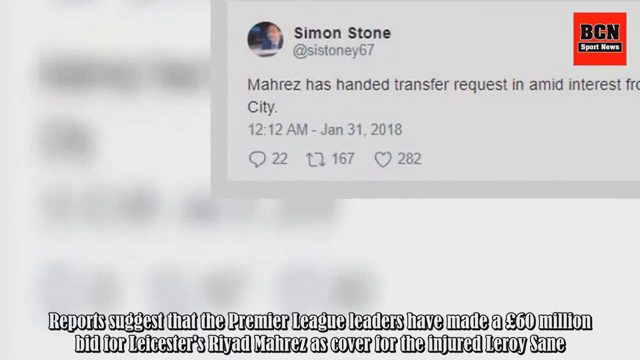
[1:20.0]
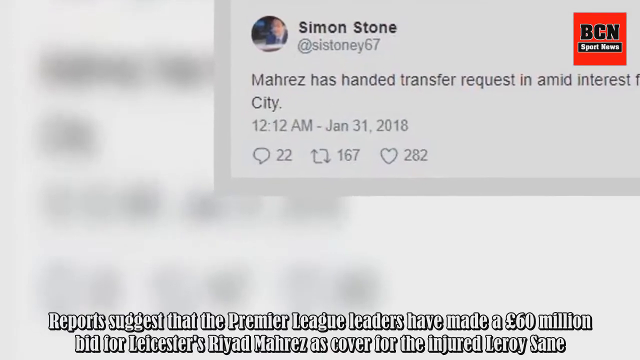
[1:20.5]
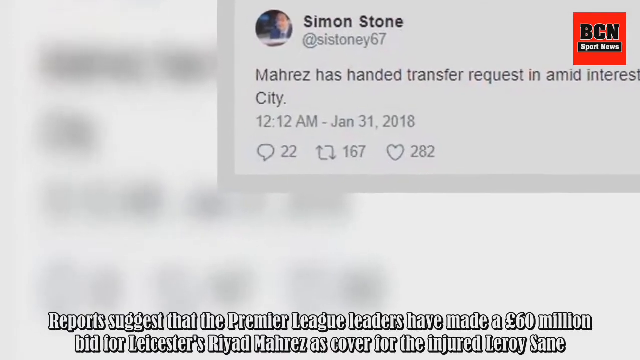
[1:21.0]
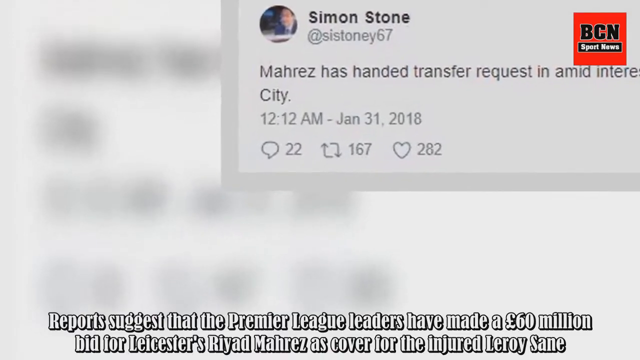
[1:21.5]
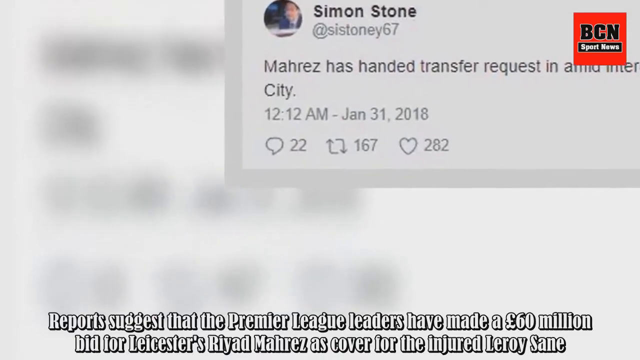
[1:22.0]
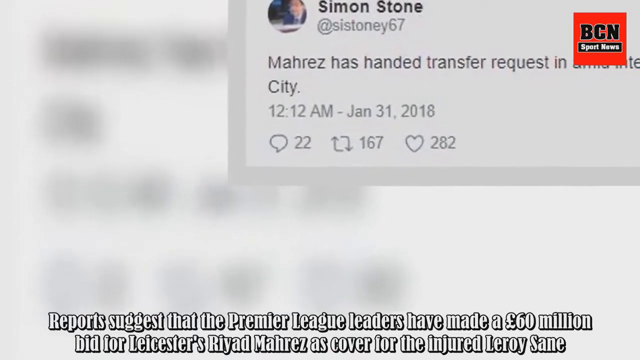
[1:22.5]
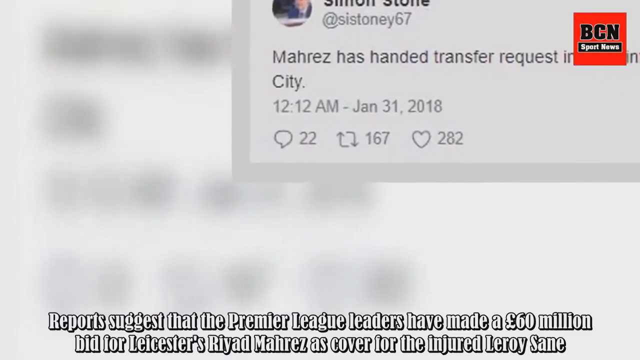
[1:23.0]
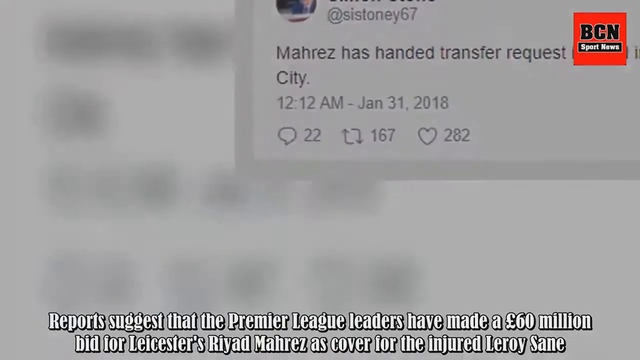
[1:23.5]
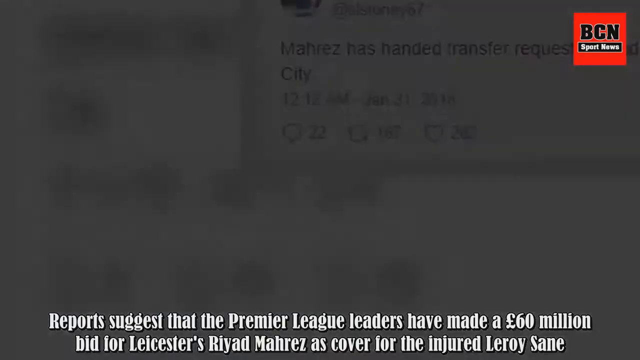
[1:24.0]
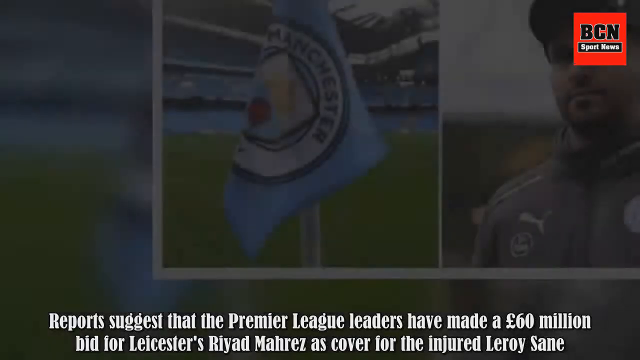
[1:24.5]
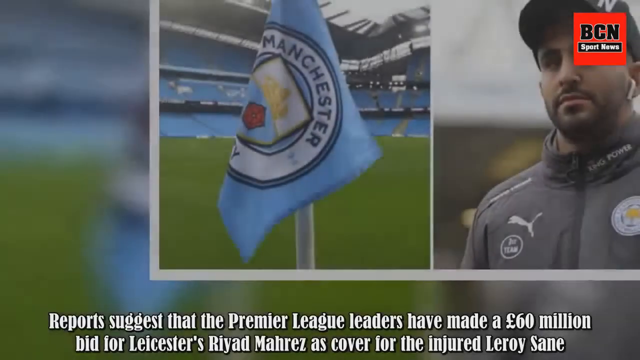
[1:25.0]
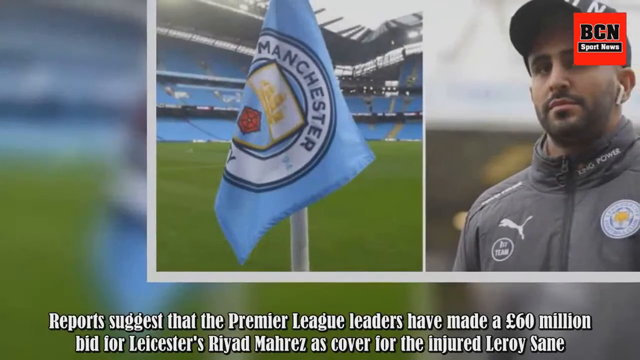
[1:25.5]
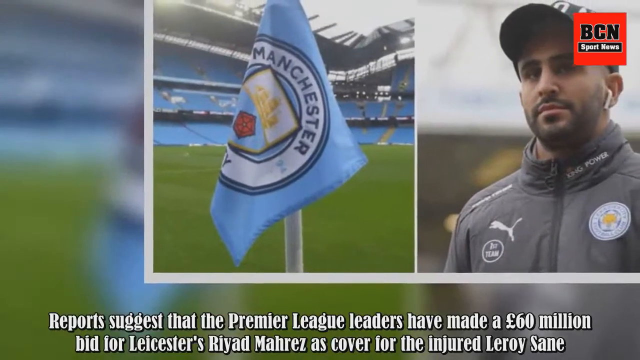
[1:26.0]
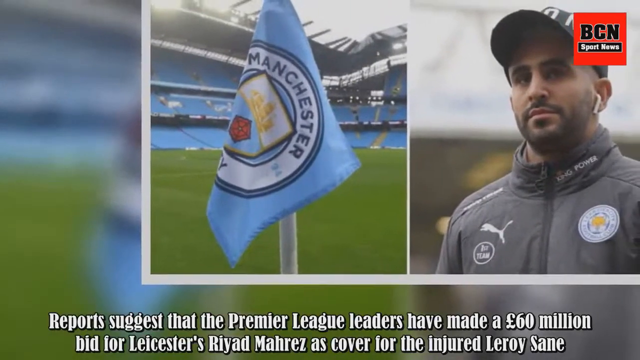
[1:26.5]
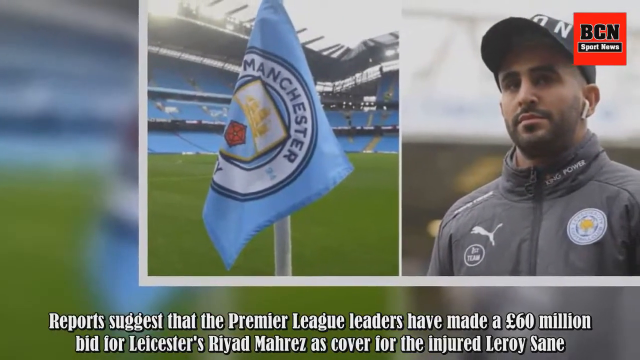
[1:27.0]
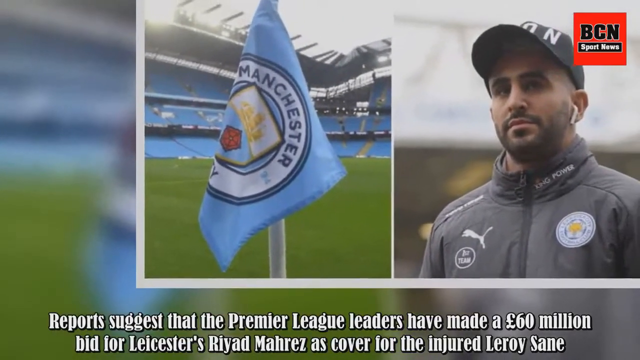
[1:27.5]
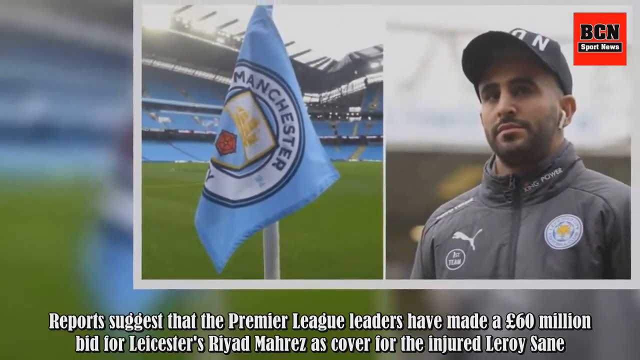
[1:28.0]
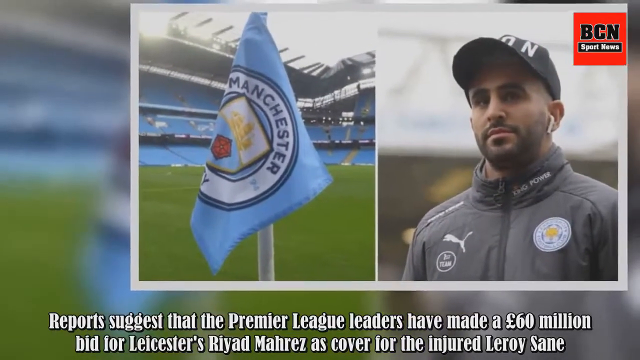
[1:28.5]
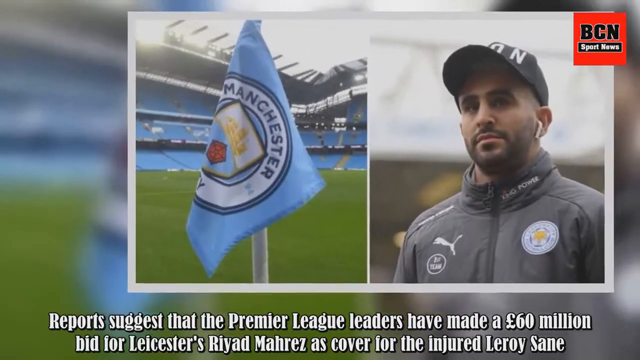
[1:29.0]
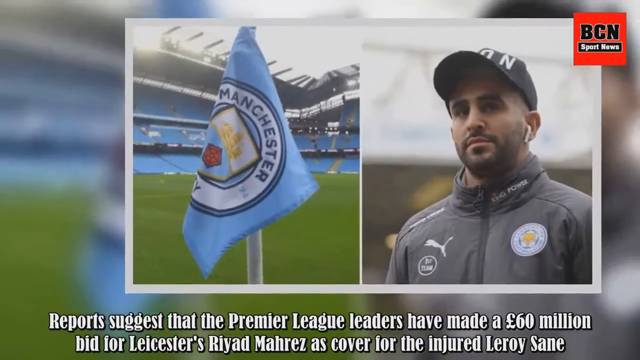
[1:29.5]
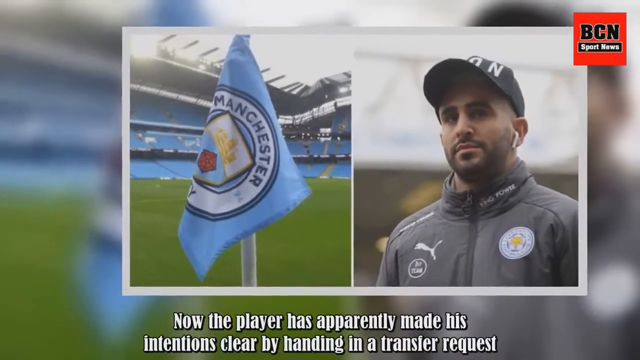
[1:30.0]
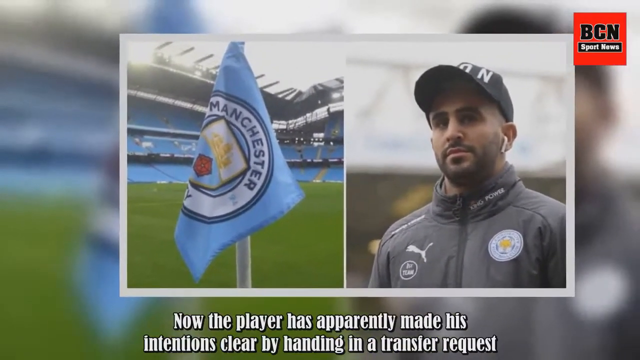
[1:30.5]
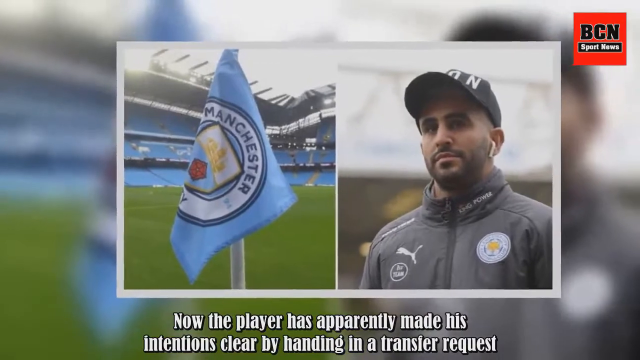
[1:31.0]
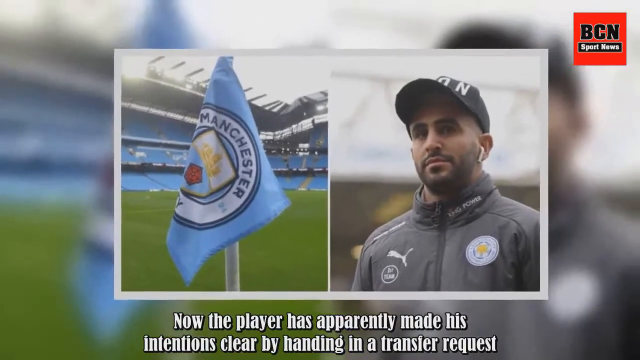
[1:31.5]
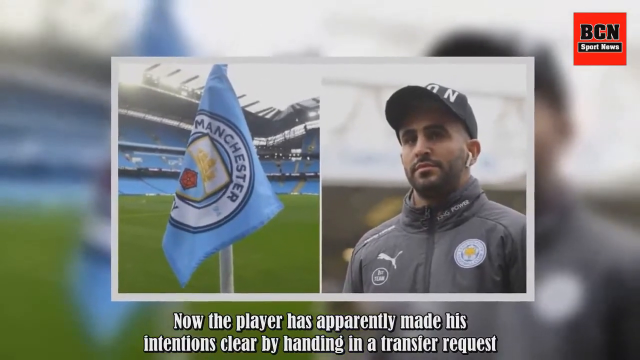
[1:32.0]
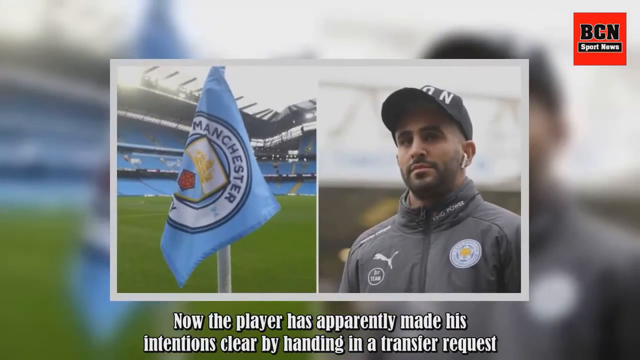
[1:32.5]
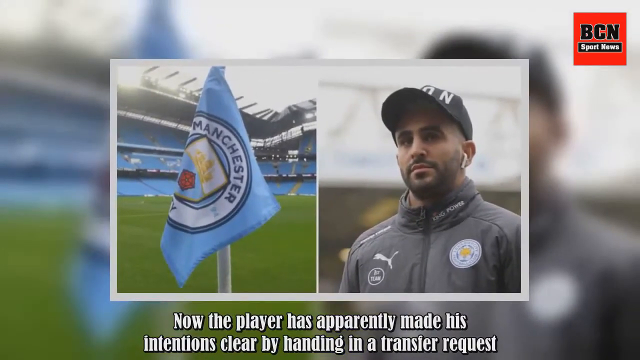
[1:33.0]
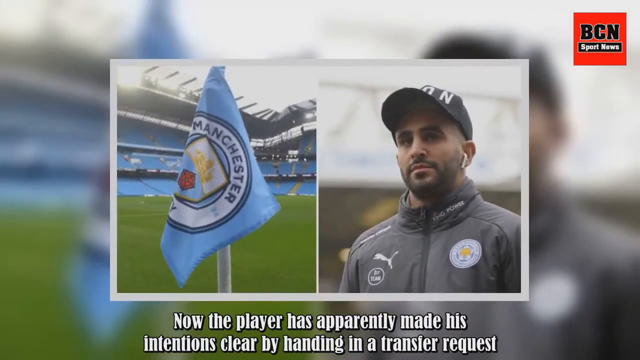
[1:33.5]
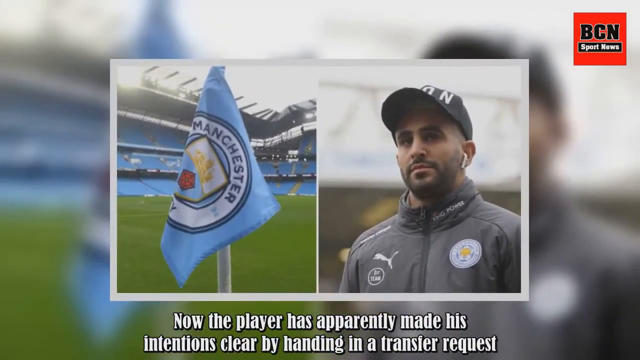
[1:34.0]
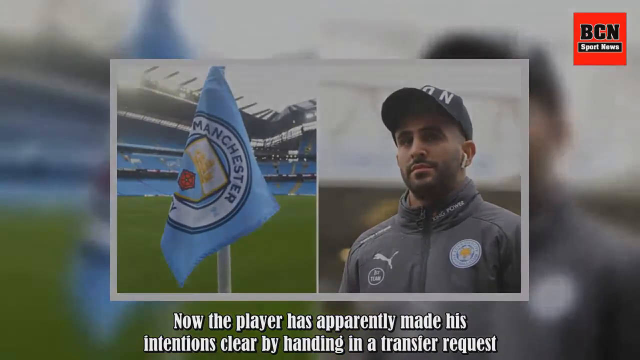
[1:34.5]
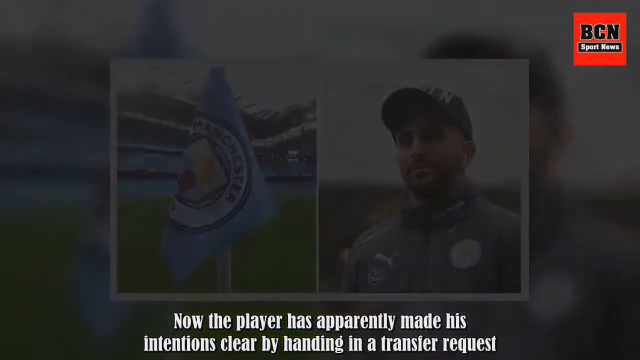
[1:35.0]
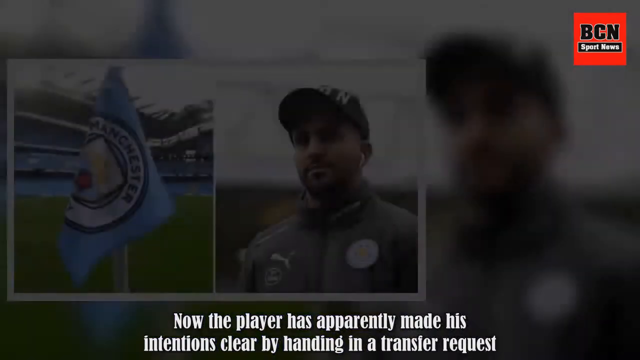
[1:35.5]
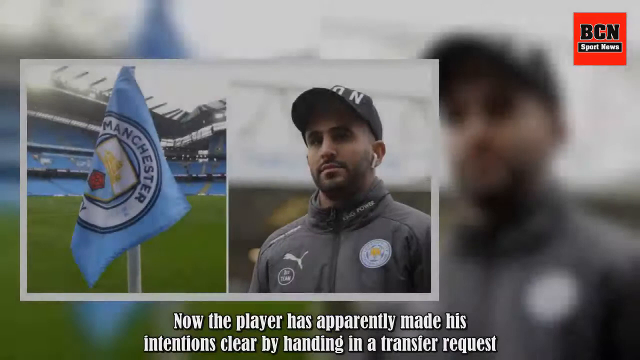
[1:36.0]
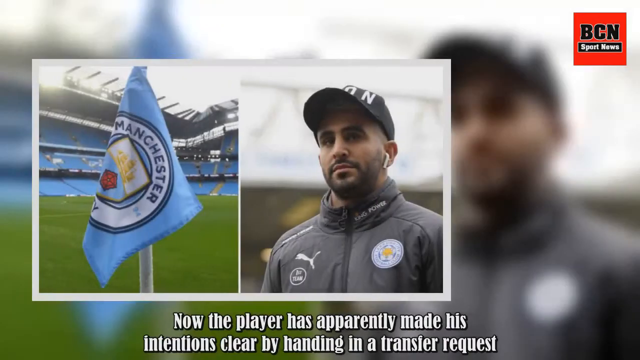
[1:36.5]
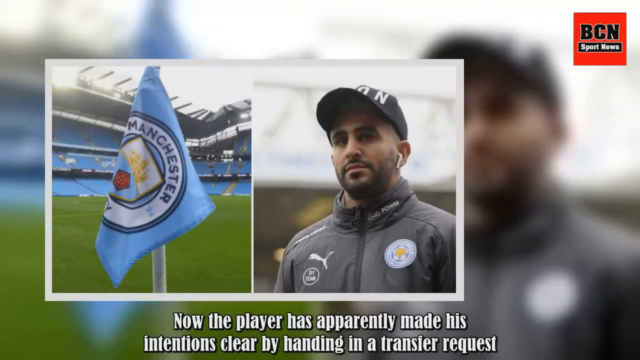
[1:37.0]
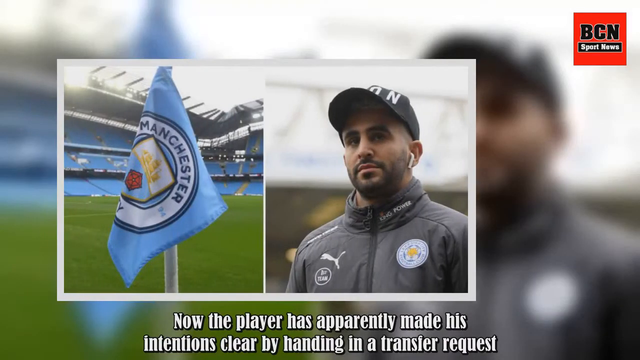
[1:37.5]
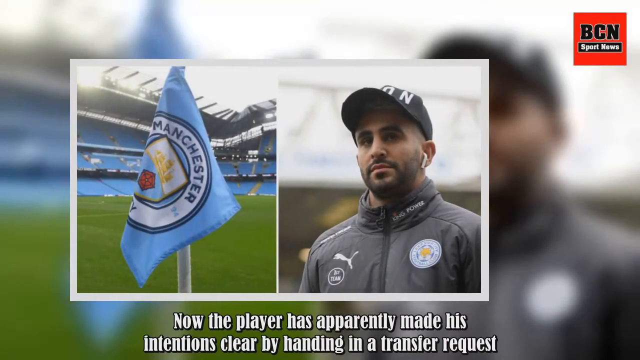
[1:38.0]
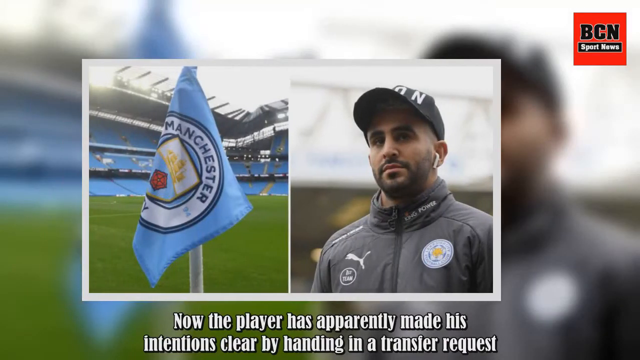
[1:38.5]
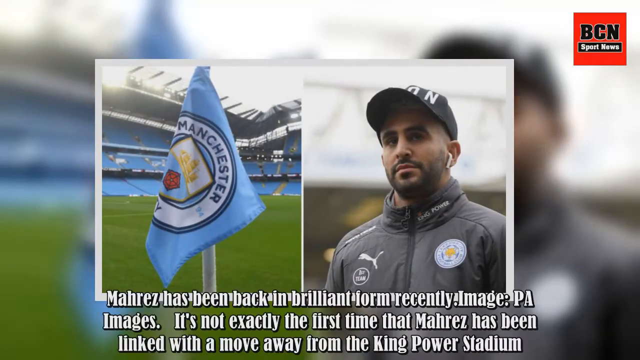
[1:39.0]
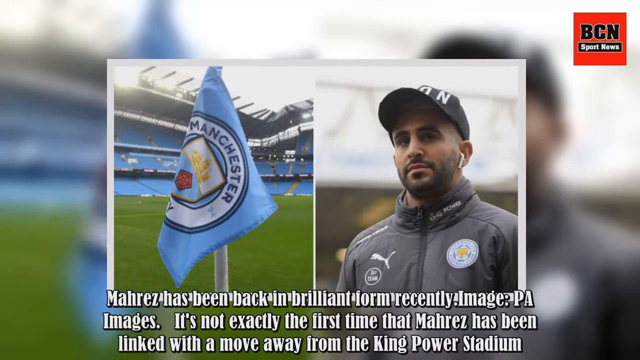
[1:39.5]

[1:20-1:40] In the top left, a tweet about a handed-in transfer request and interest from a City club is shown, with a Twitter bird visible. The background is completely blurry. White text at the very bottom of the screen begins "report suggests that the Premier League leaders" and includes "as a cover for injured Leroy Saint."